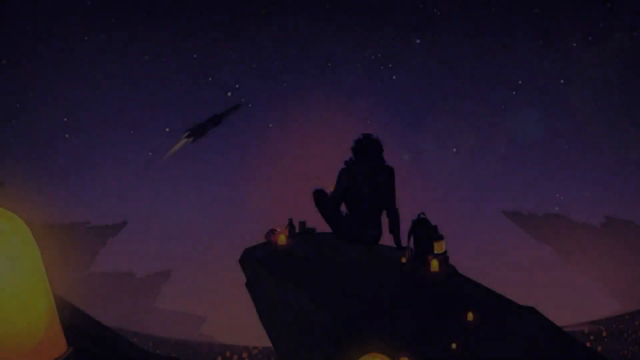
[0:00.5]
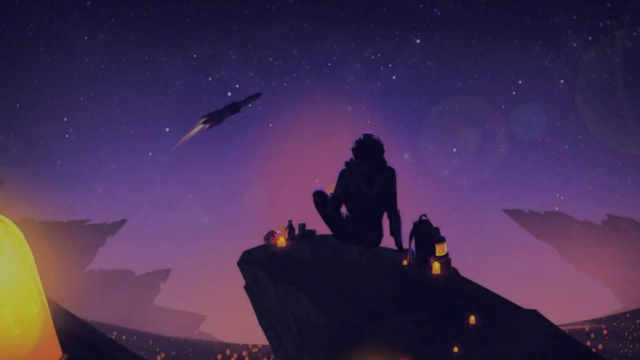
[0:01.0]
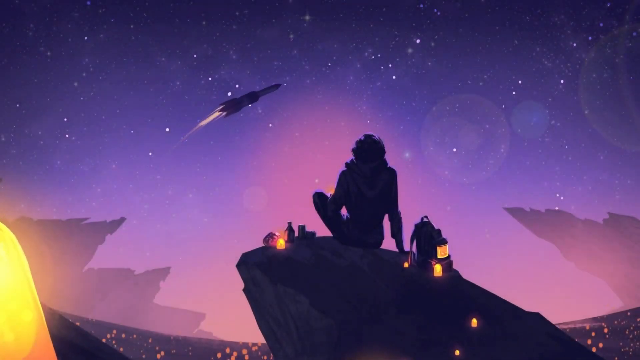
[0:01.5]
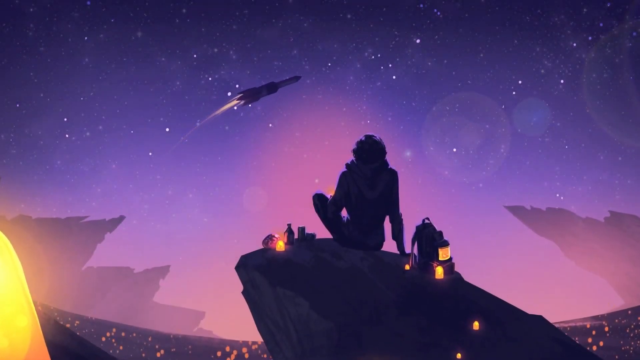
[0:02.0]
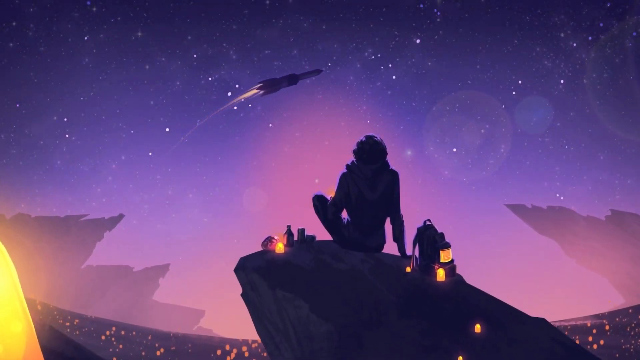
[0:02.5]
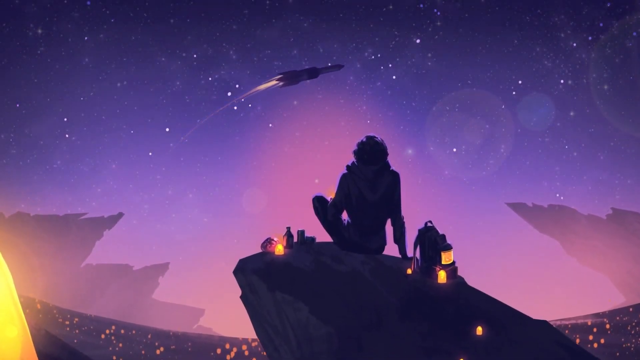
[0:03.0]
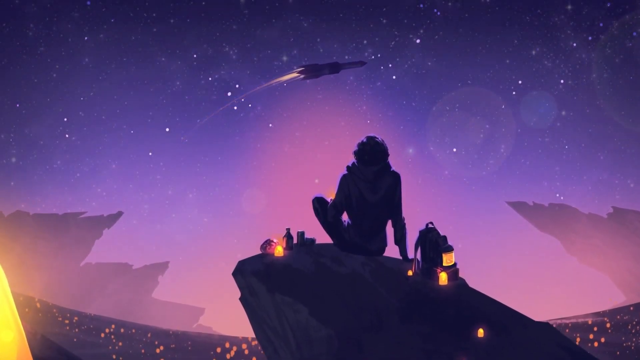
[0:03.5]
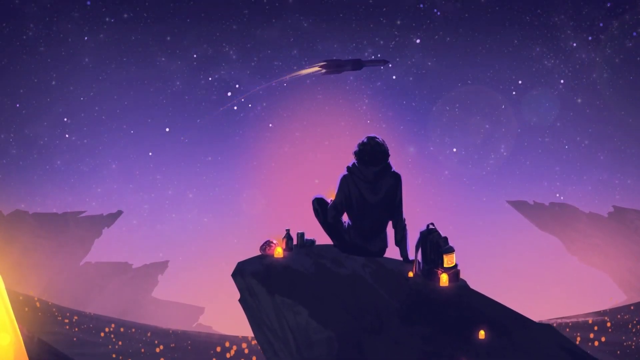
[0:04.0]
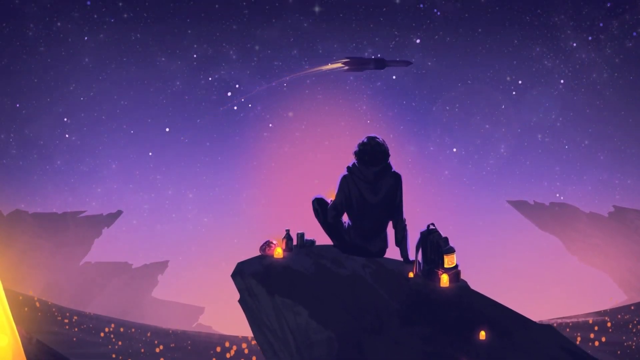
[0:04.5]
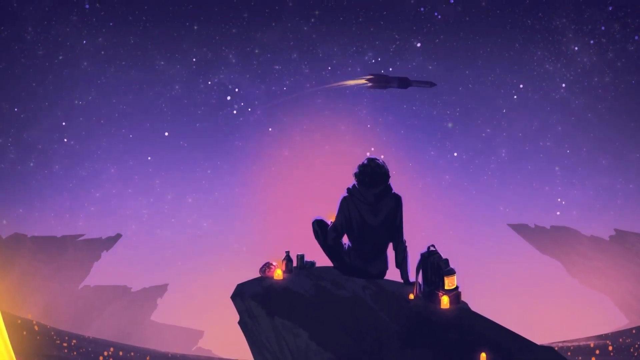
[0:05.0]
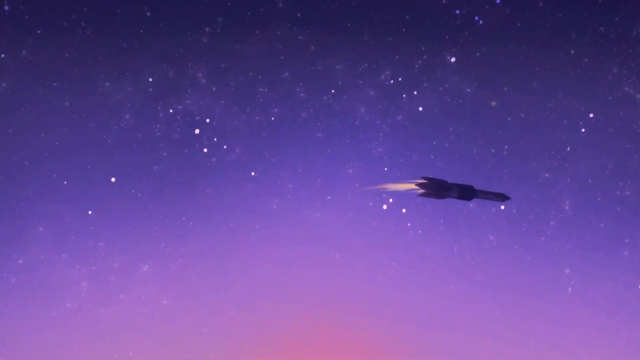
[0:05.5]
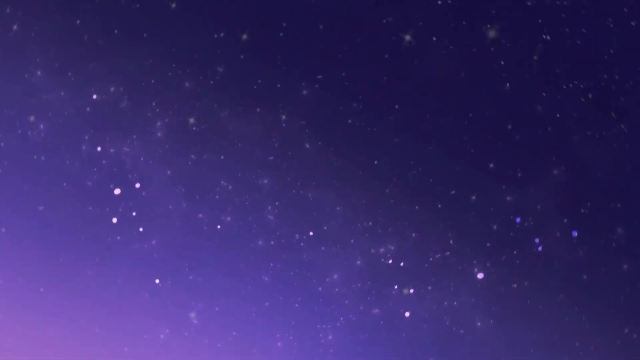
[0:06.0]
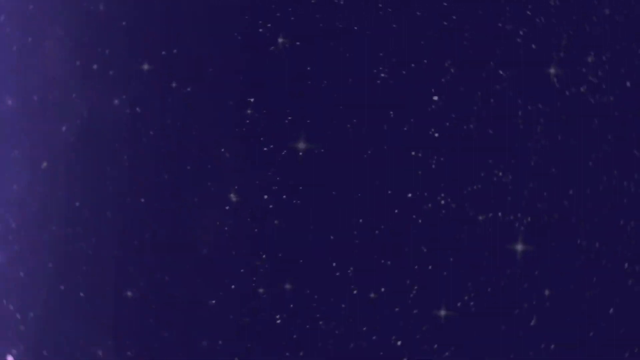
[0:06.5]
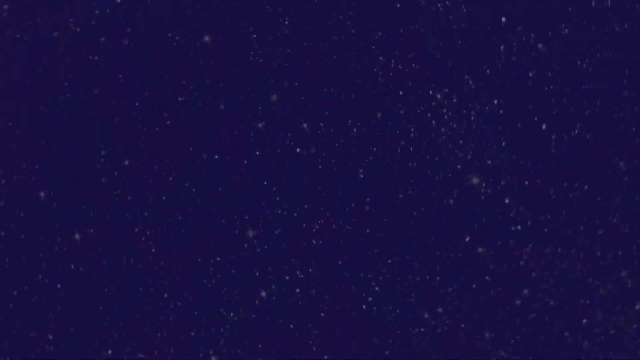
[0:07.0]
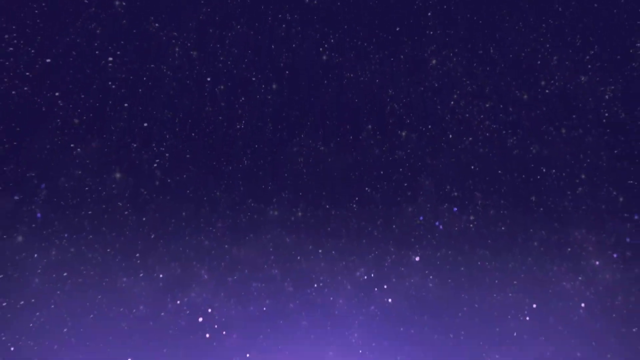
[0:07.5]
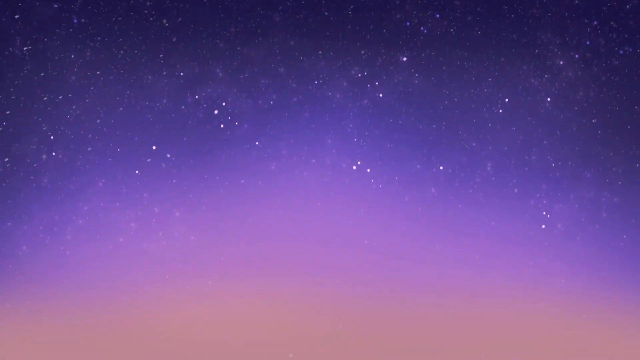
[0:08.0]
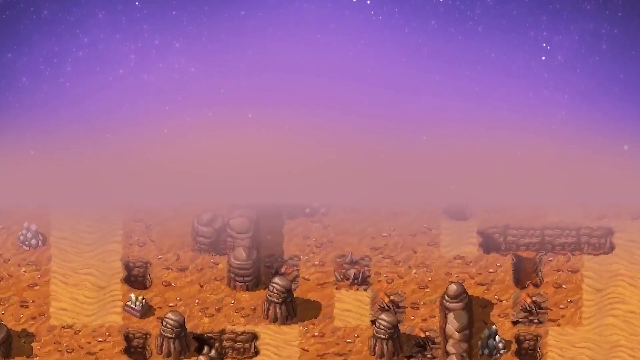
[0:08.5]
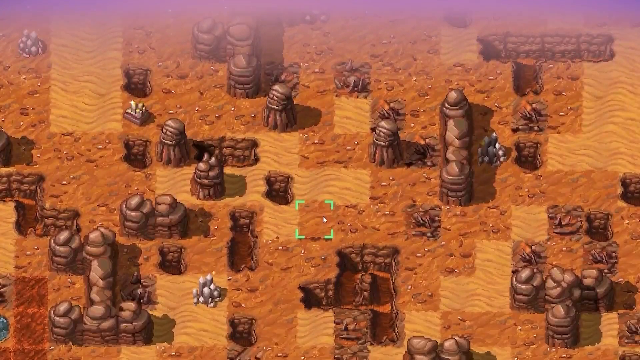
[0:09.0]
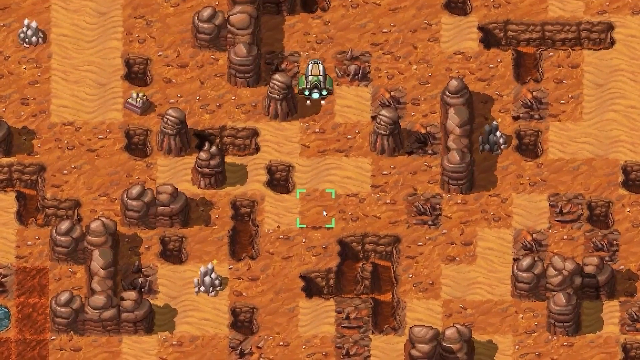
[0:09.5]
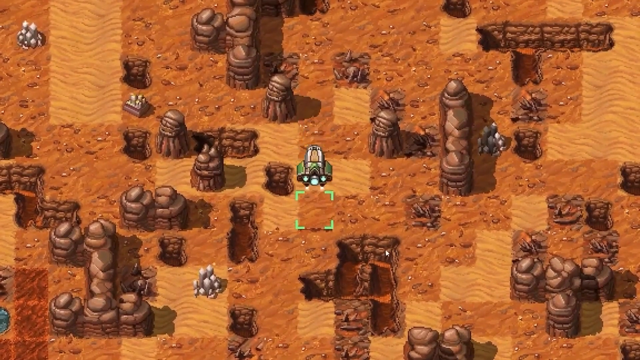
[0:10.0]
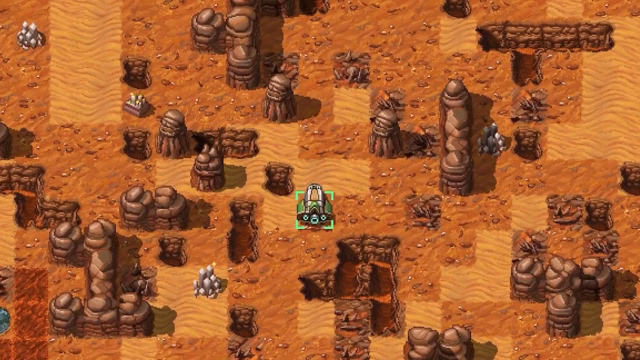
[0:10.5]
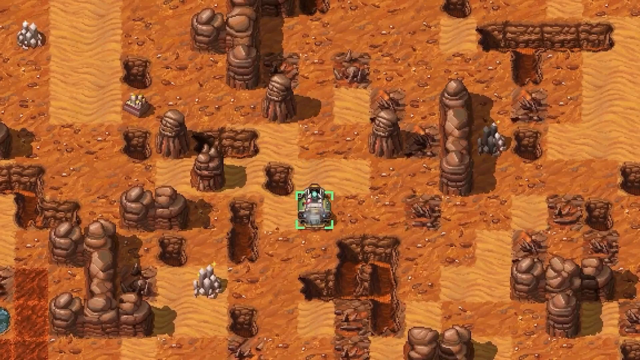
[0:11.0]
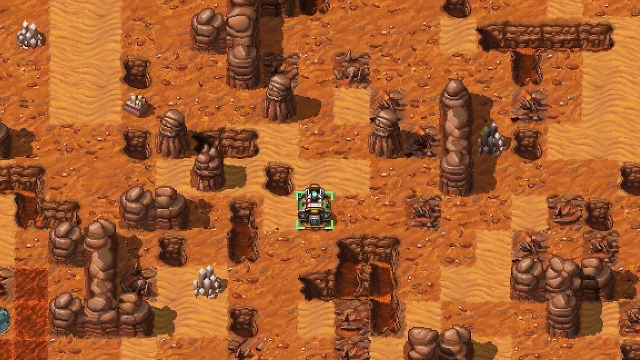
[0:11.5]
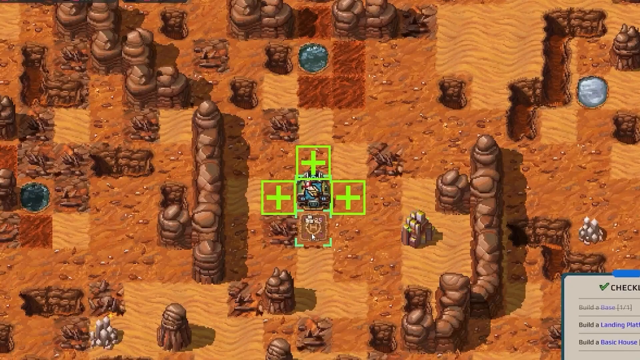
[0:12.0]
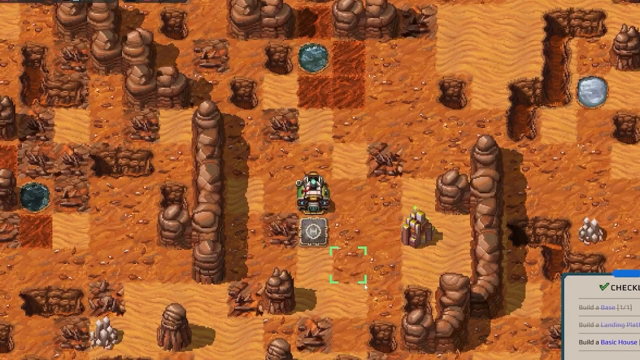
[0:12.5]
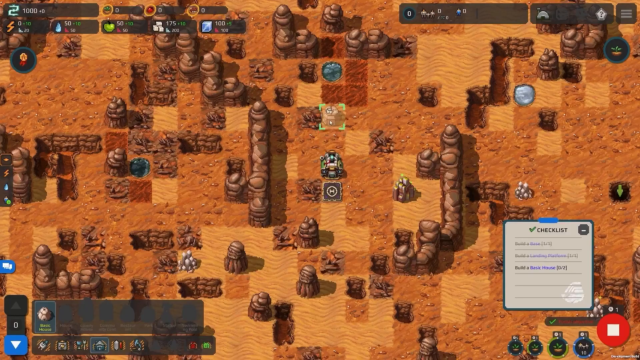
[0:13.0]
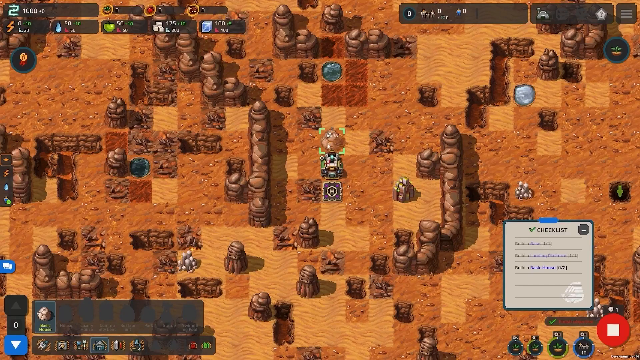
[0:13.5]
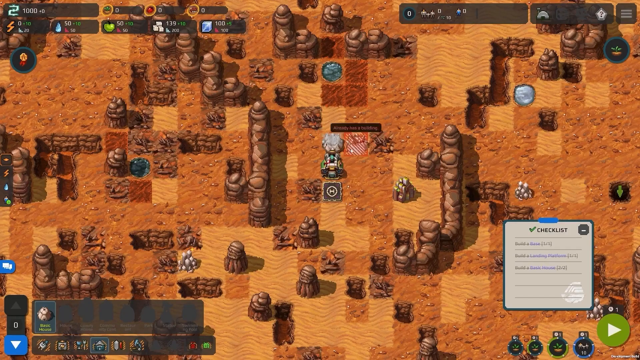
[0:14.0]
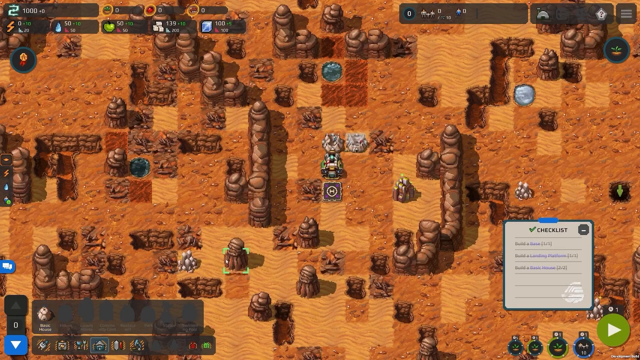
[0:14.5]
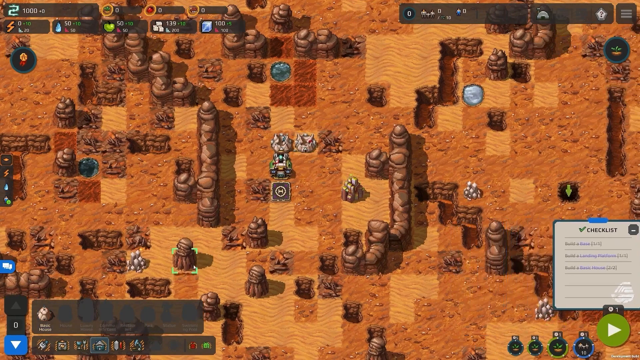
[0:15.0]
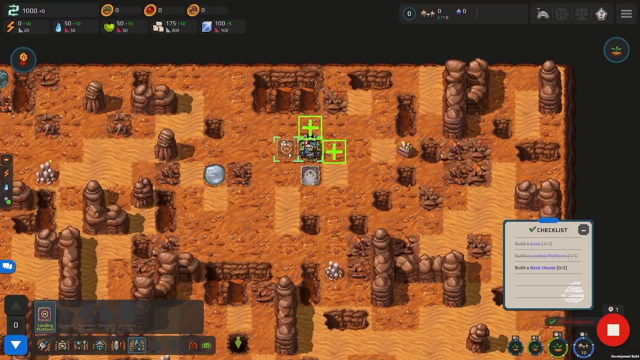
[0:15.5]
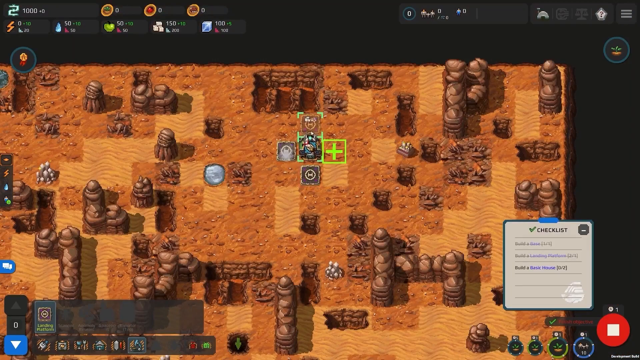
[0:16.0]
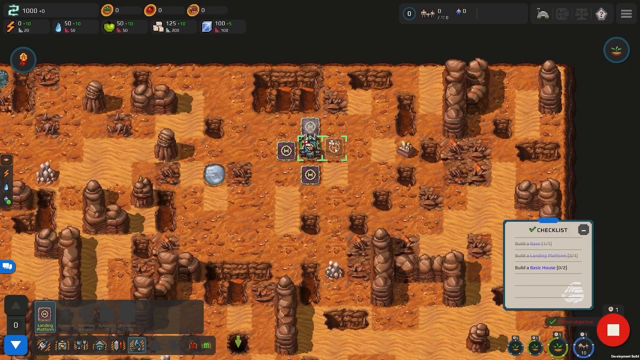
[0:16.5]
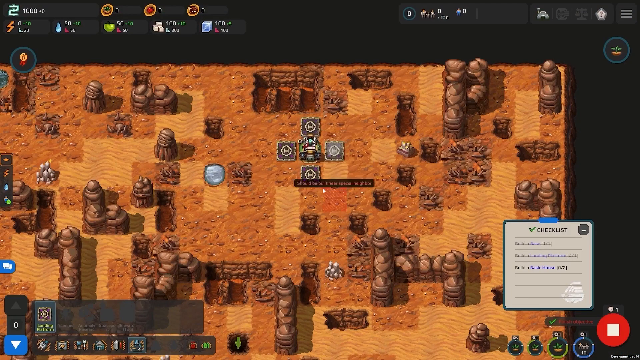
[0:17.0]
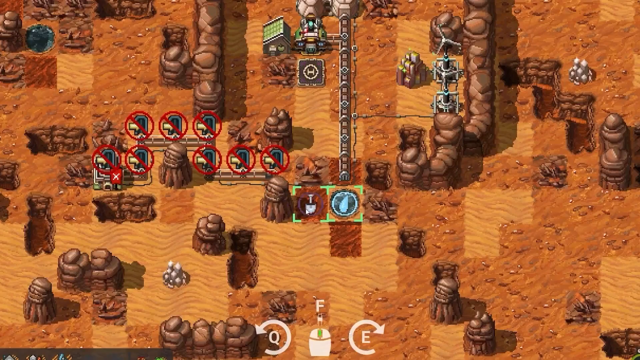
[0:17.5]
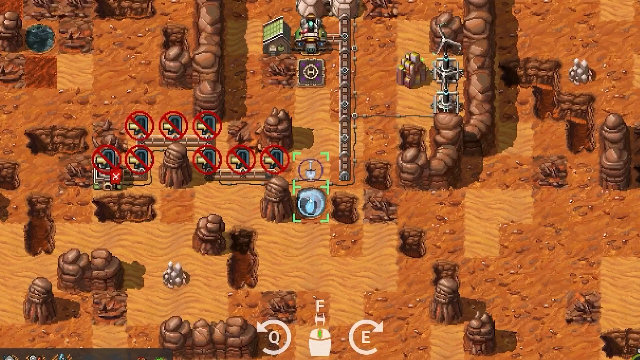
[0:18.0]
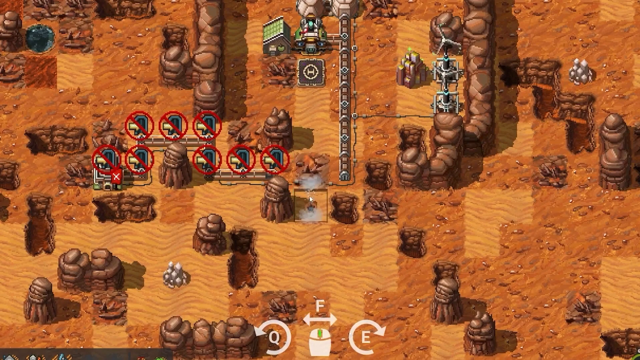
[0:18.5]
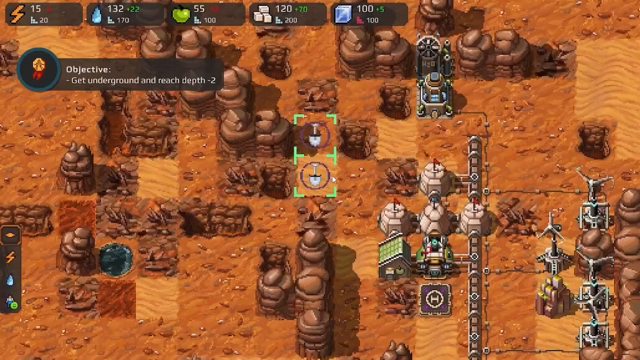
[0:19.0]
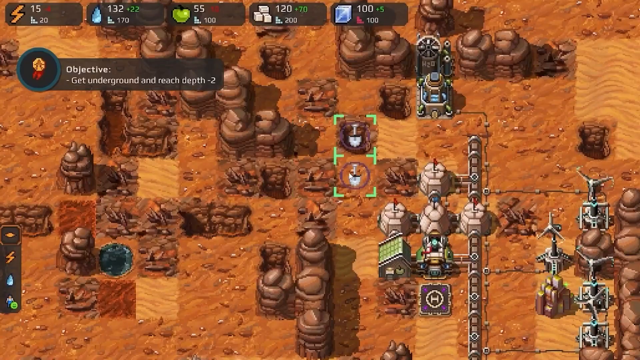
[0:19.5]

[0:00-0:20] A person sits on a high-up rock looking out into space while a rocket ship goes up above them. The video then shows the rocket ship landing in what looks like a strategy-type game. The player clicks the ground in many areas, and a green box pops up around everything. They are building what look like little installations of some kind. Some that pop up have a shovel on them, and when that happens, dirt is dug or mountains are removed. The green areas have little plus symbols inside them, apparently marking where something can be built. When the rocket ship lands, the four squares that are lit up are all touching the spaceship.